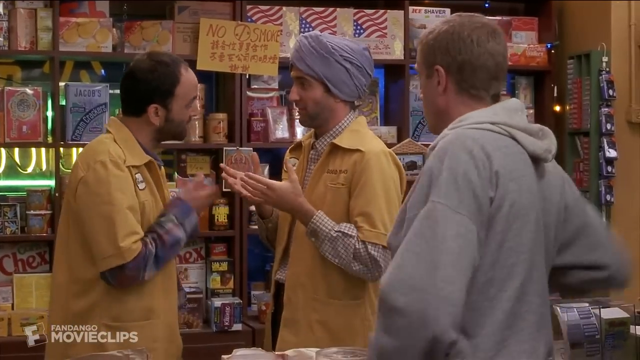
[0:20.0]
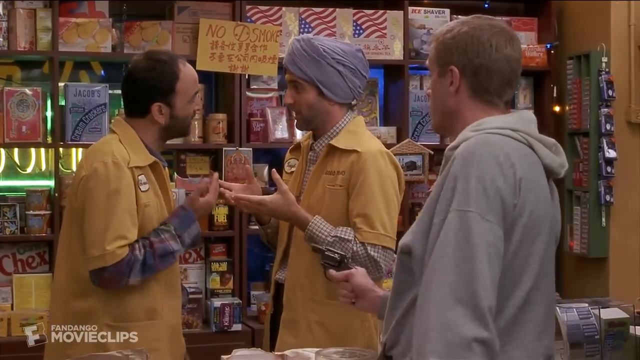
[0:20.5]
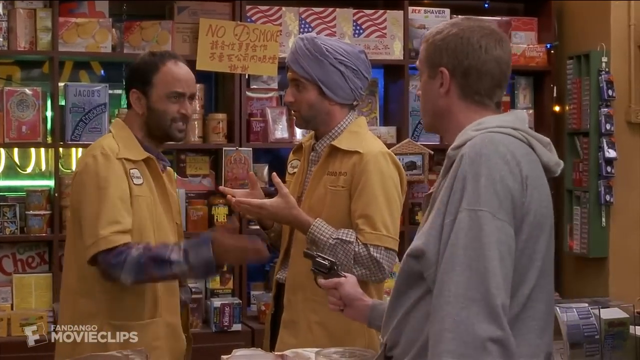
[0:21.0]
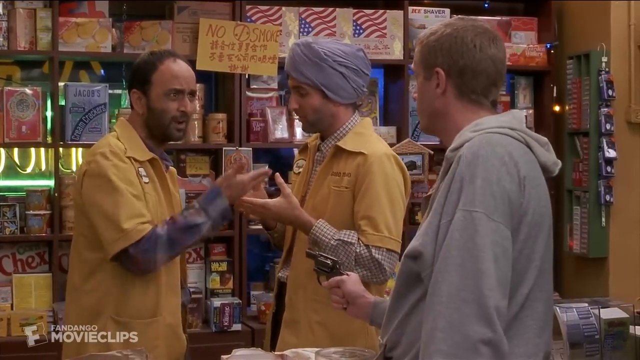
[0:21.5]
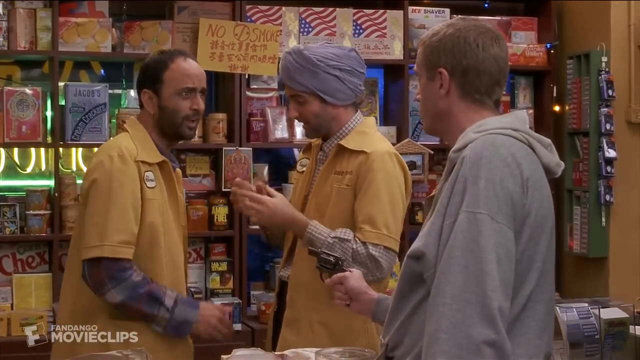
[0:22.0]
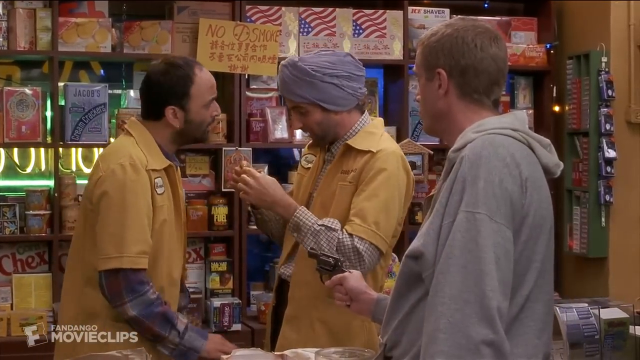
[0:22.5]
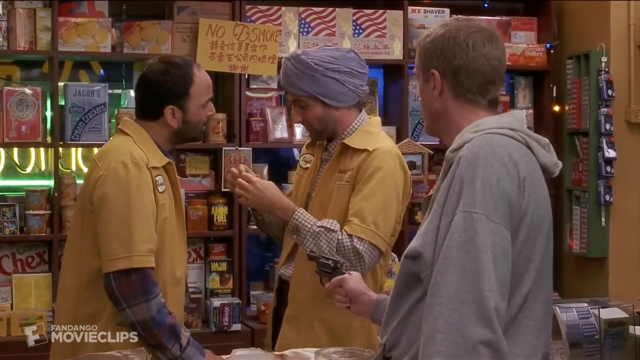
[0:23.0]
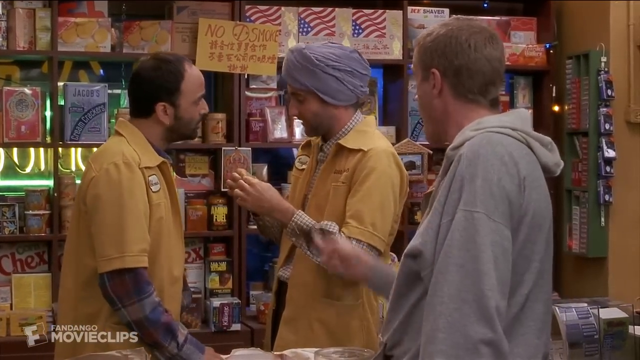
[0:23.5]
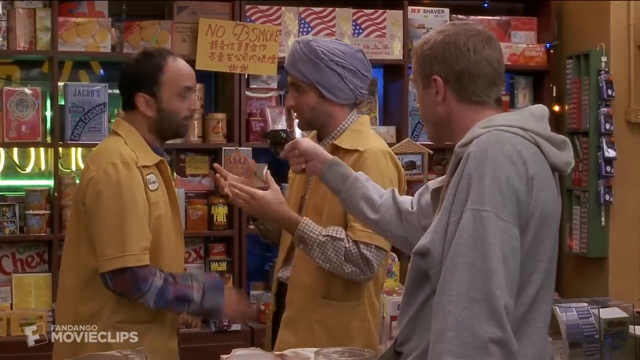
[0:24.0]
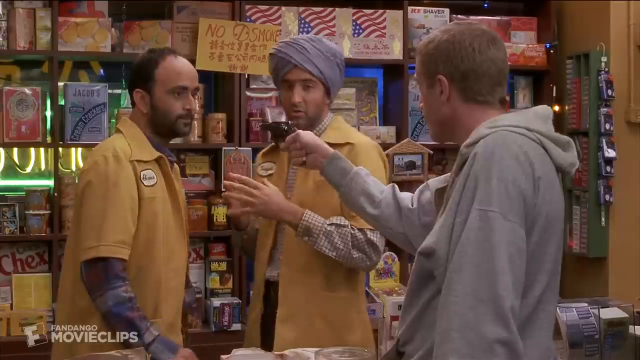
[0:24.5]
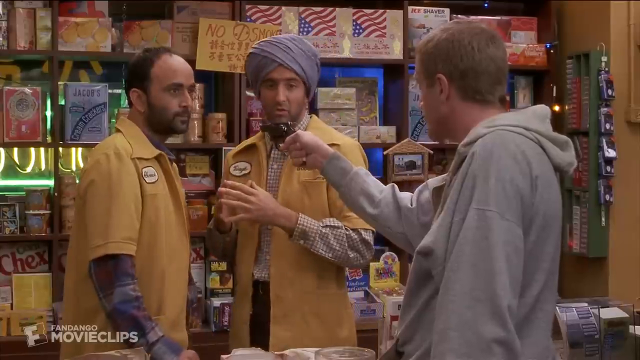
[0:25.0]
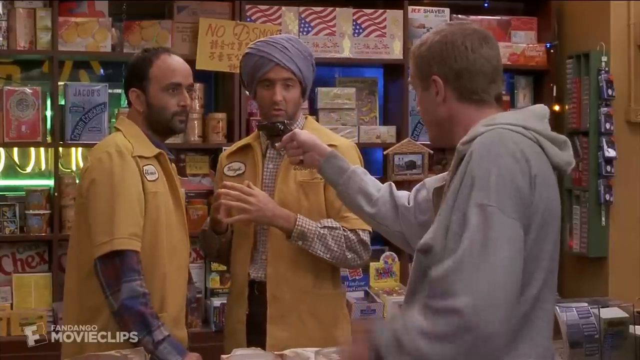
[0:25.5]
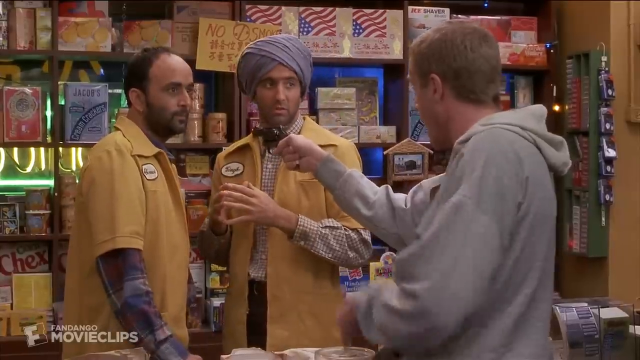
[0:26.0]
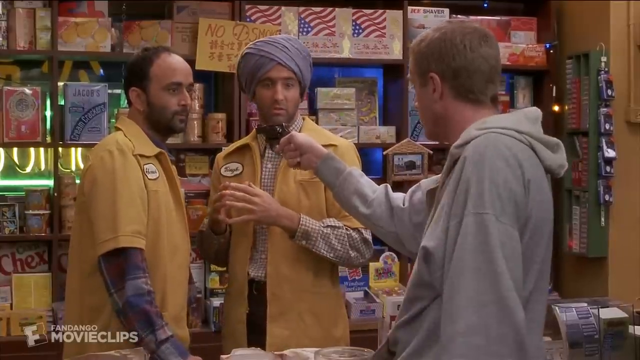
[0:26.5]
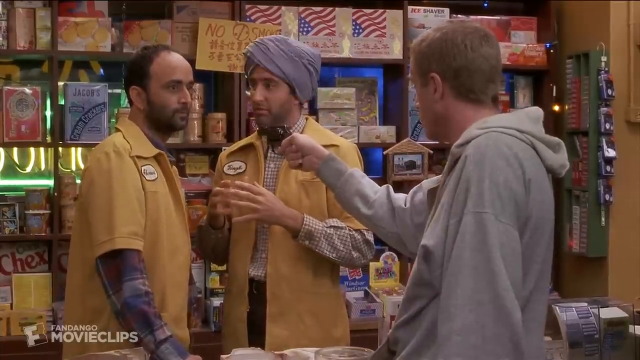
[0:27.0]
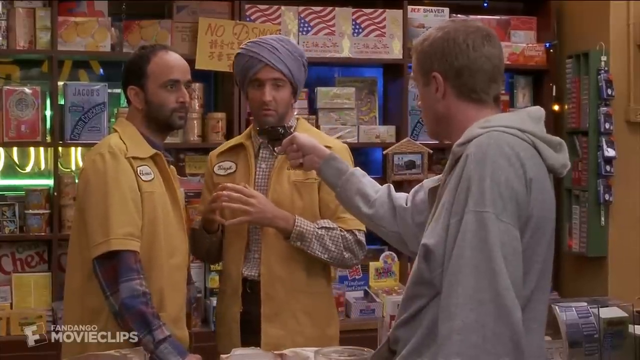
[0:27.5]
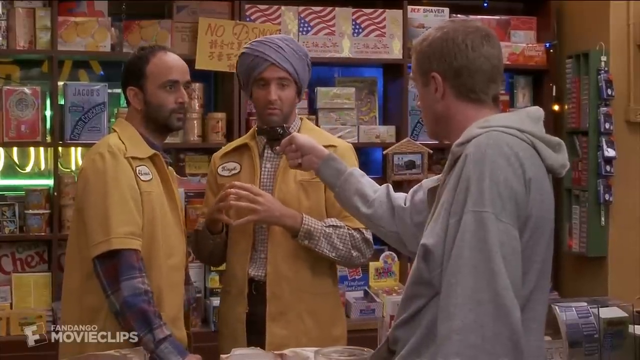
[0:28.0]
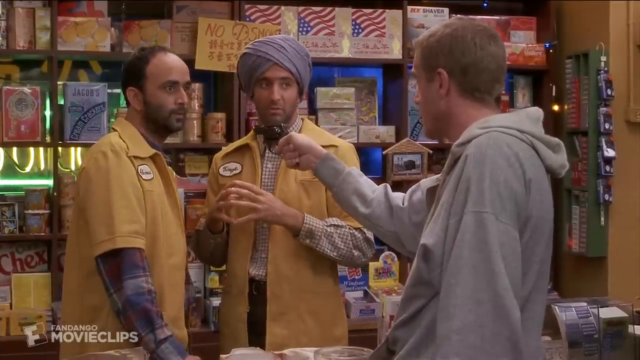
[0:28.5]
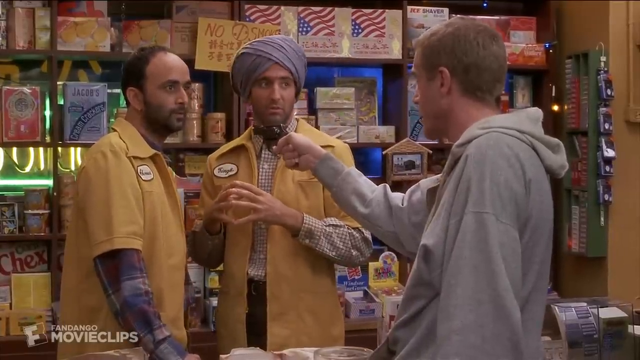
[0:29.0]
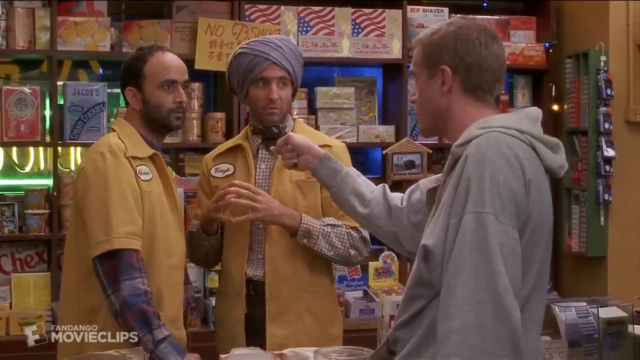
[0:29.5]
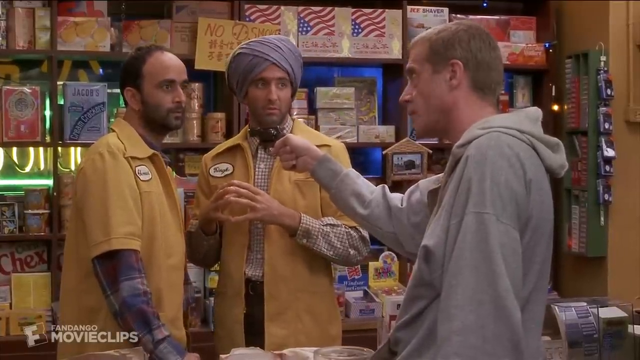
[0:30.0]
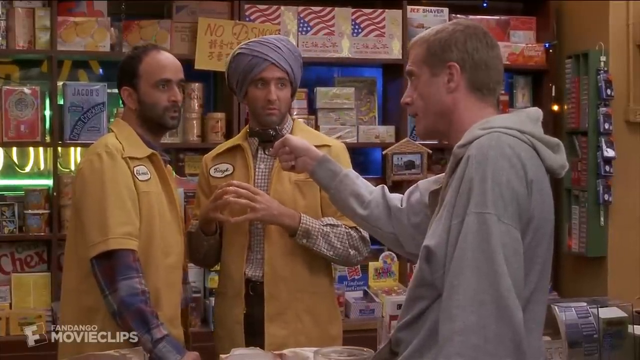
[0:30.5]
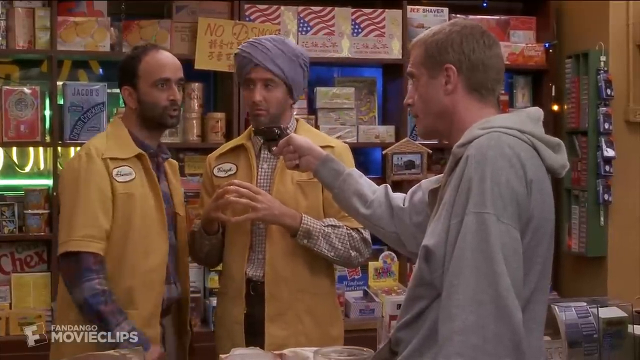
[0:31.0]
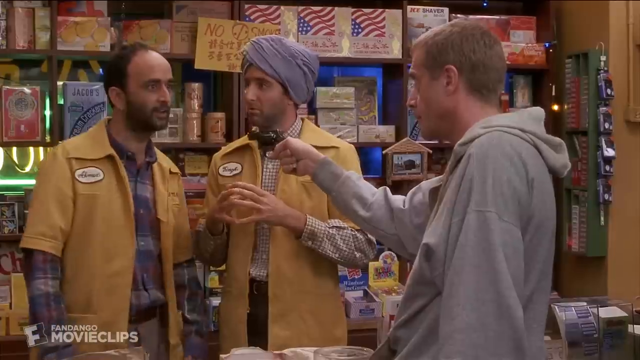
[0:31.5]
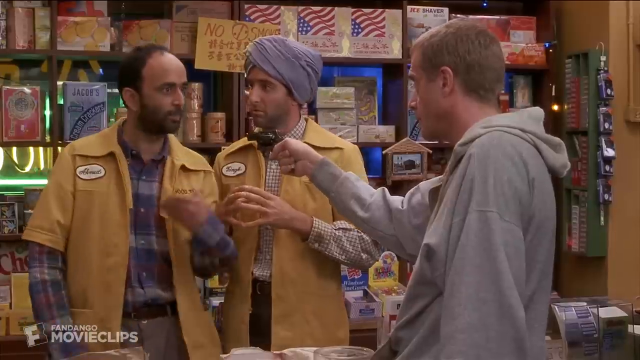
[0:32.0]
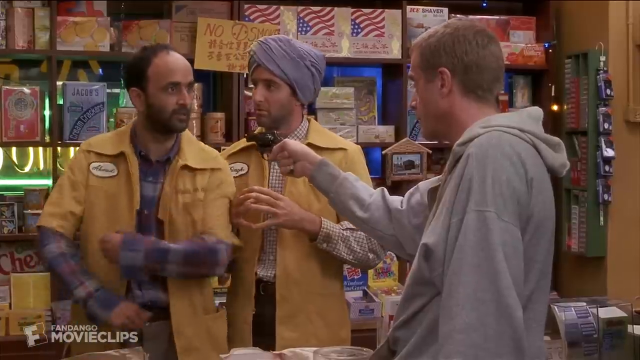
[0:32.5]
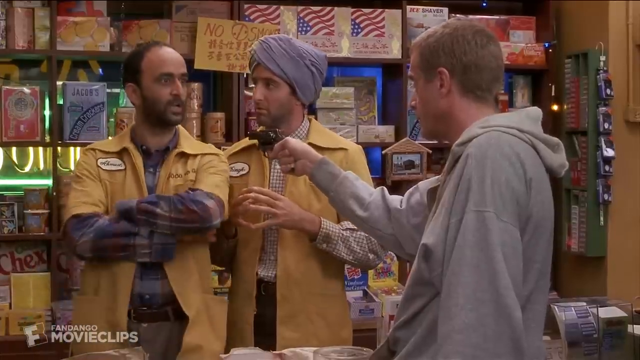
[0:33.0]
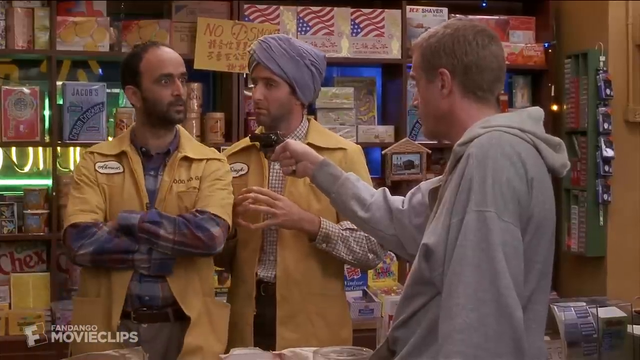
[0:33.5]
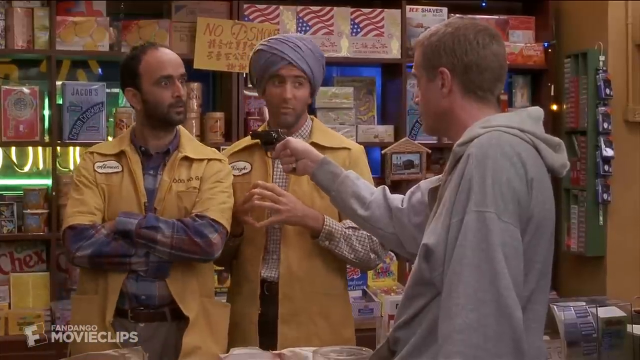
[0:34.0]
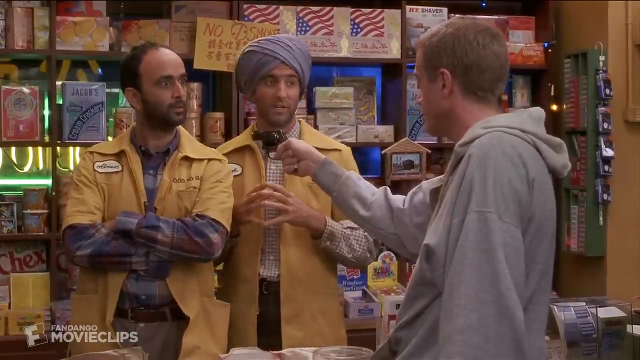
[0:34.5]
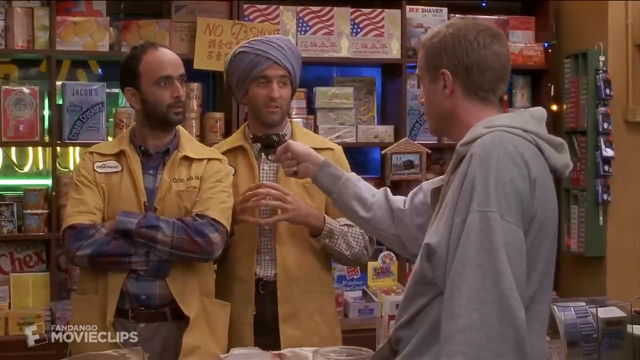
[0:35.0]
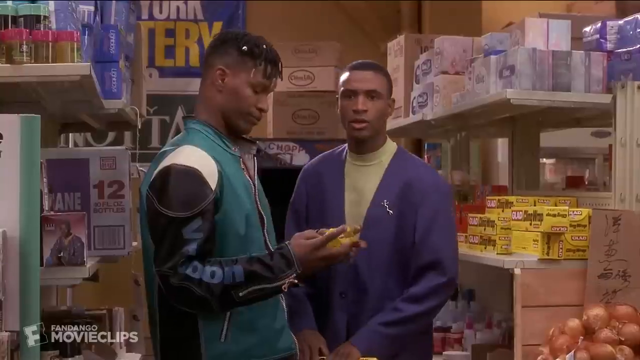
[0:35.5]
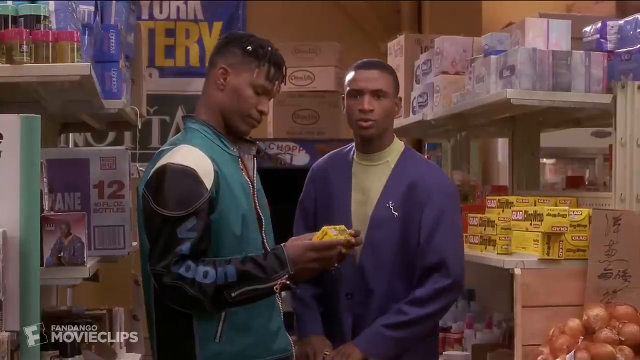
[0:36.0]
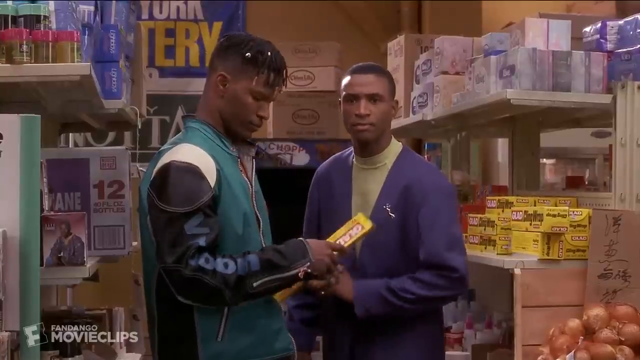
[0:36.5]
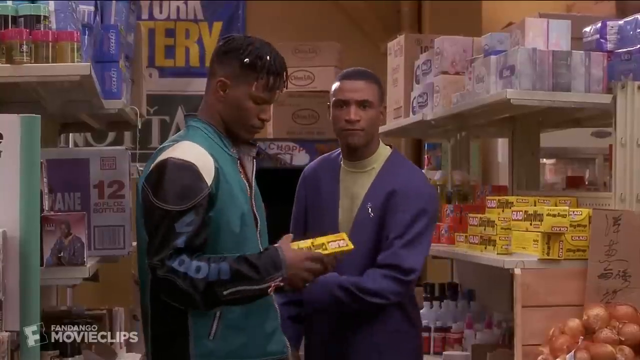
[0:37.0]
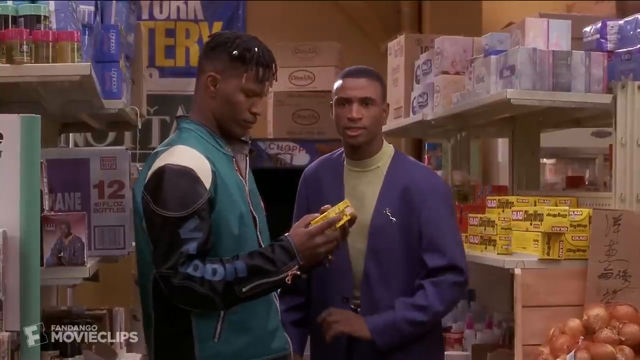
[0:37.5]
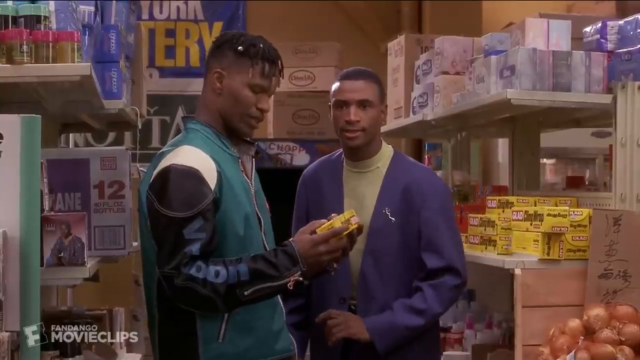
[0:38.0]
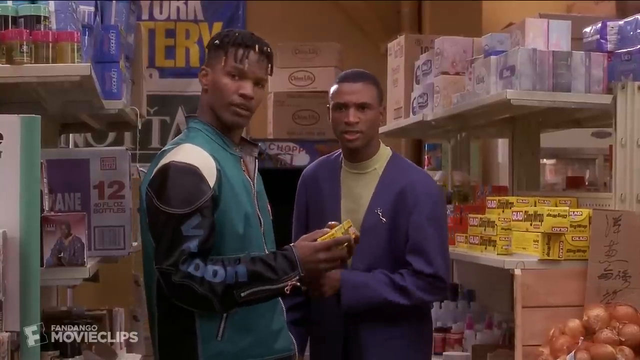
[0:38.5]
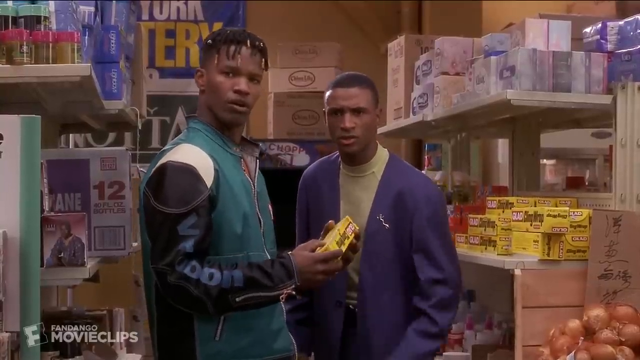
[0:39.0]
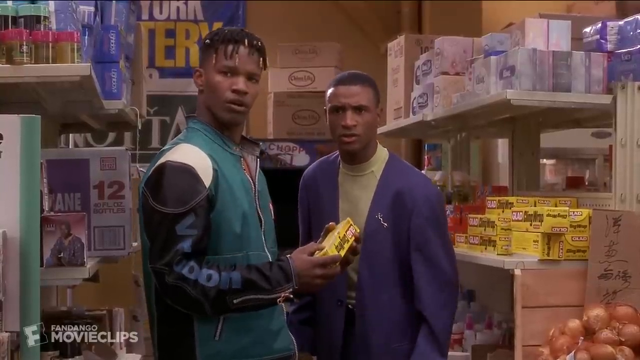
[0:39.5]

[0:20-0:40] People communicate with each other, apparently the store owners, while a man points a gun at them, apparently trying to rob the store and looking for money. The owners keep talking, possibly trying to distract him, and they look as if they know what they are doing and seem excited.